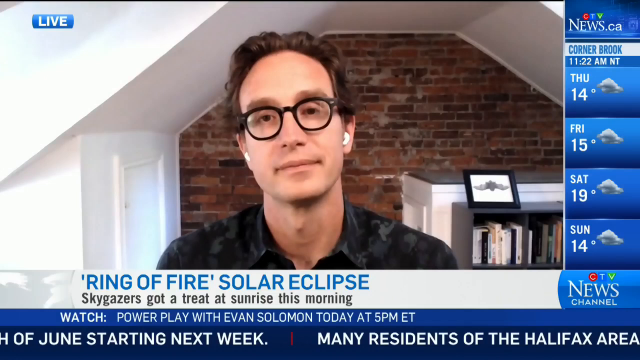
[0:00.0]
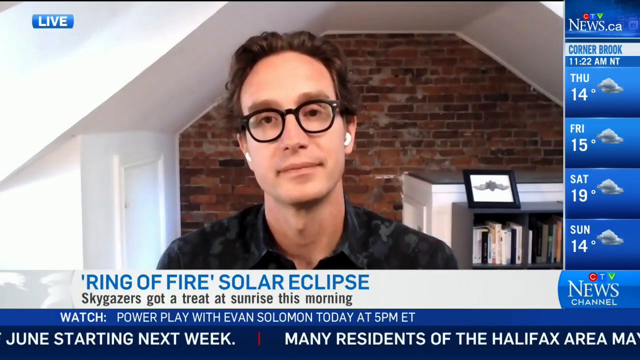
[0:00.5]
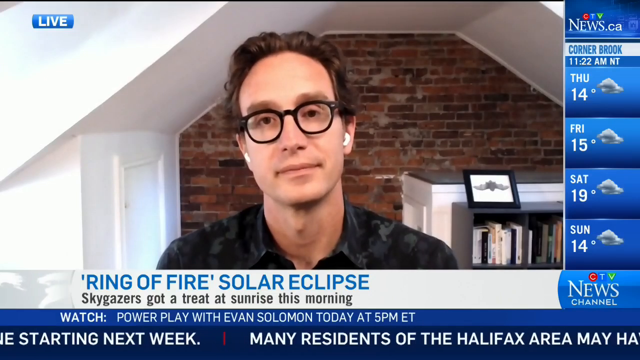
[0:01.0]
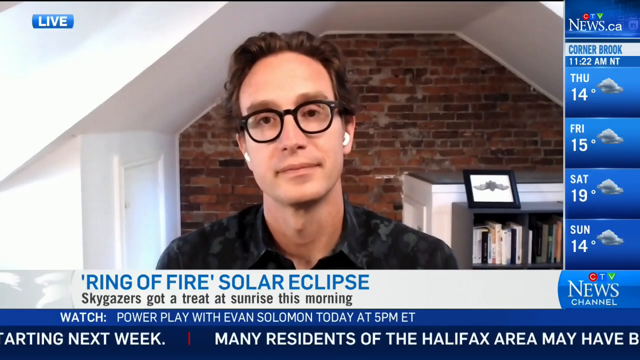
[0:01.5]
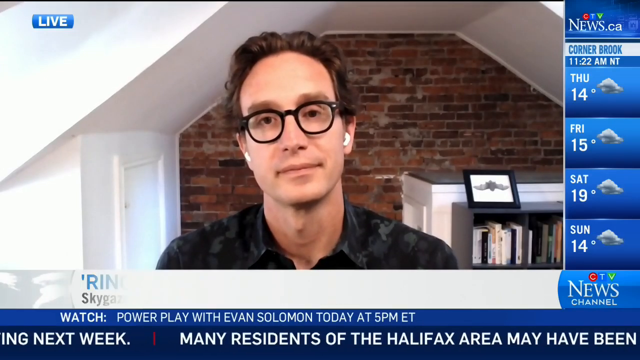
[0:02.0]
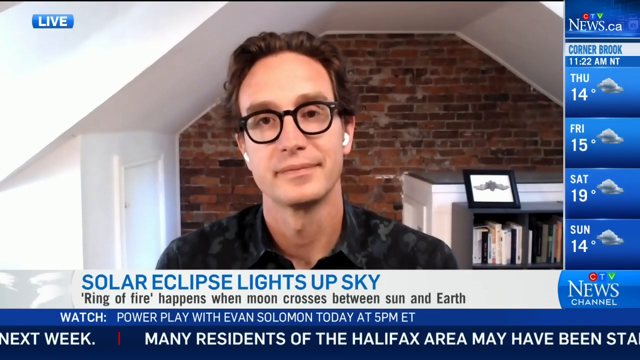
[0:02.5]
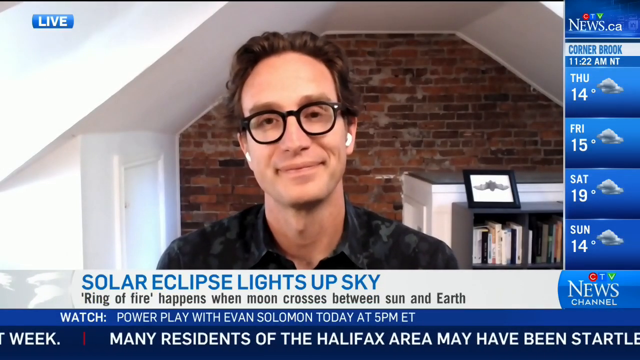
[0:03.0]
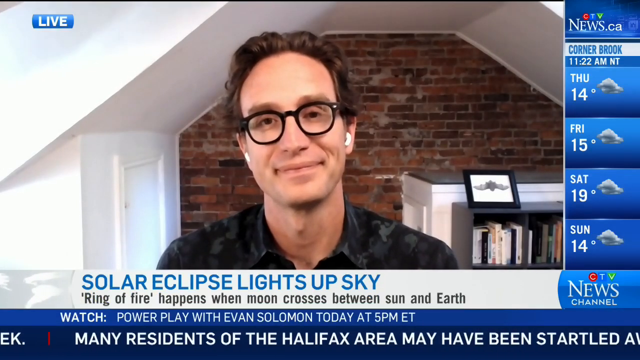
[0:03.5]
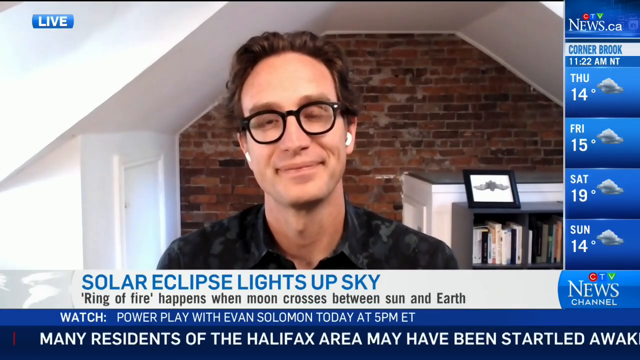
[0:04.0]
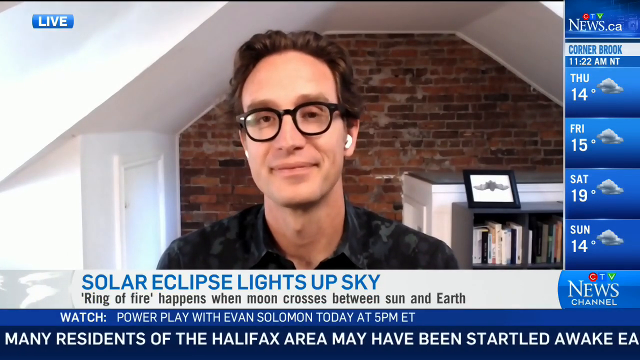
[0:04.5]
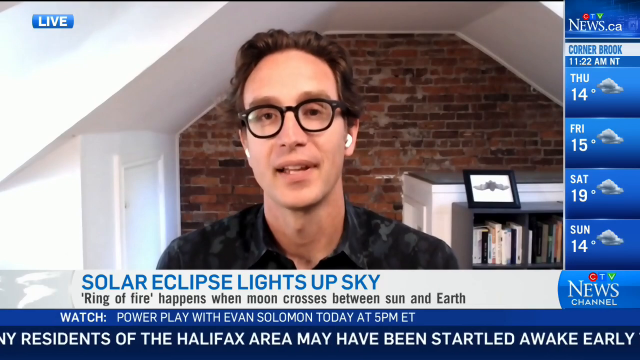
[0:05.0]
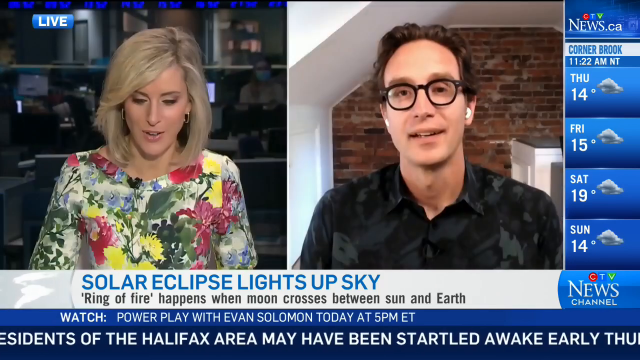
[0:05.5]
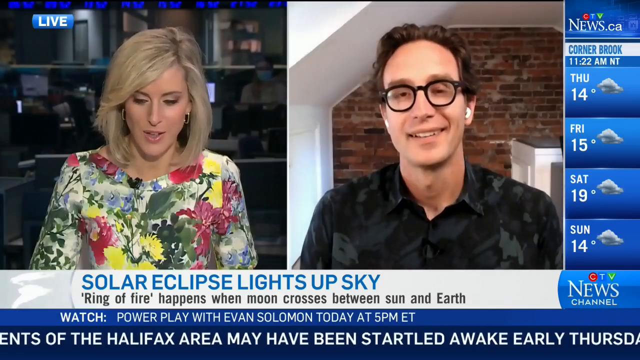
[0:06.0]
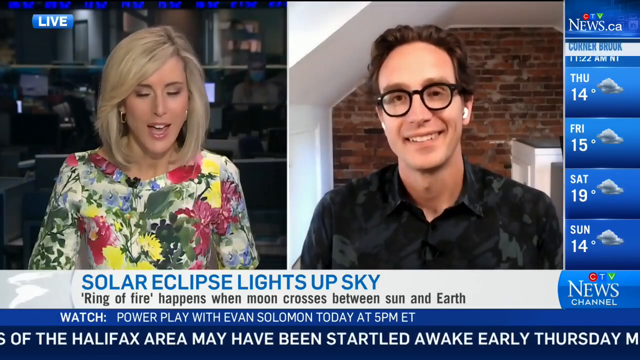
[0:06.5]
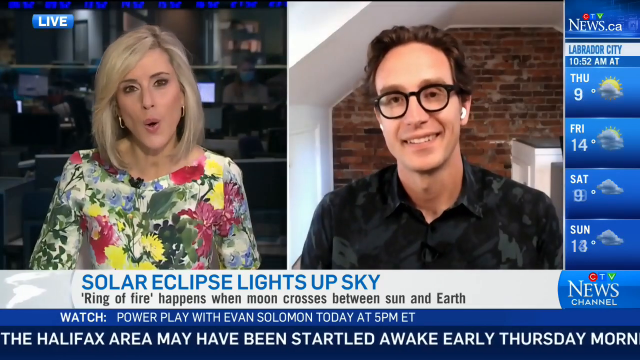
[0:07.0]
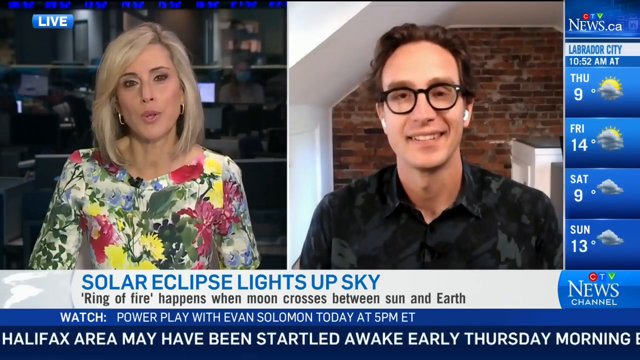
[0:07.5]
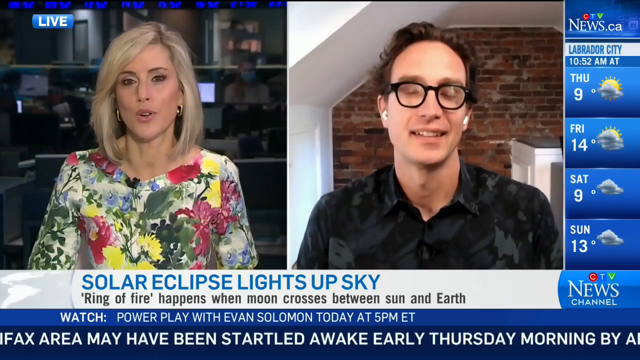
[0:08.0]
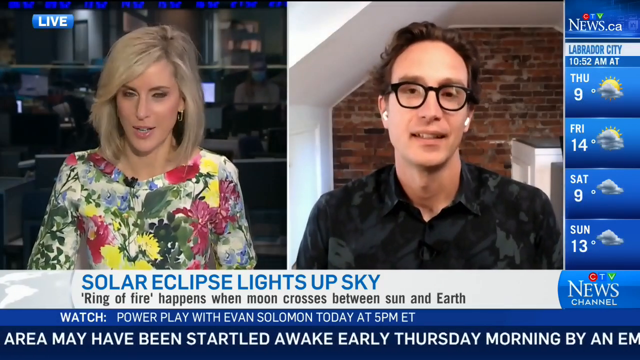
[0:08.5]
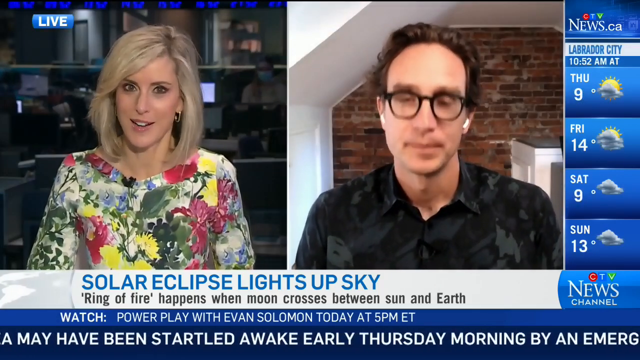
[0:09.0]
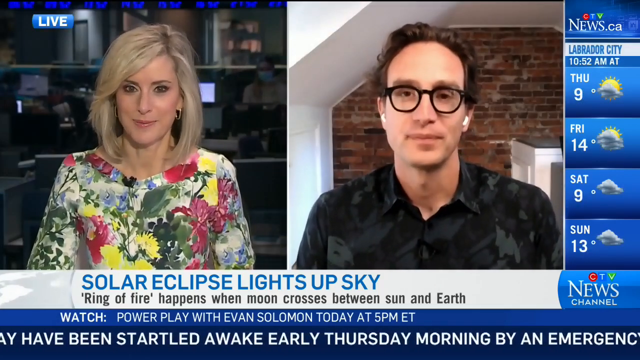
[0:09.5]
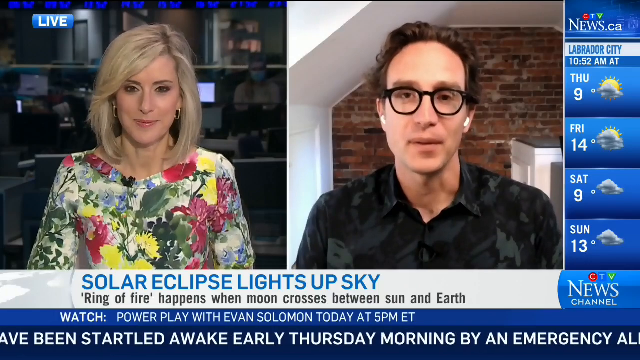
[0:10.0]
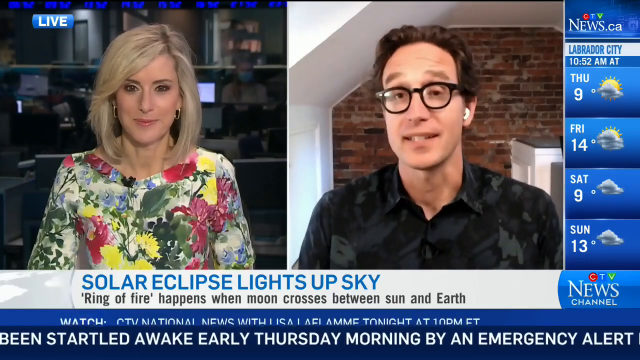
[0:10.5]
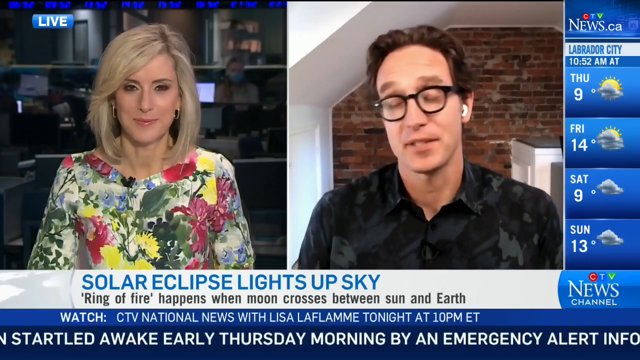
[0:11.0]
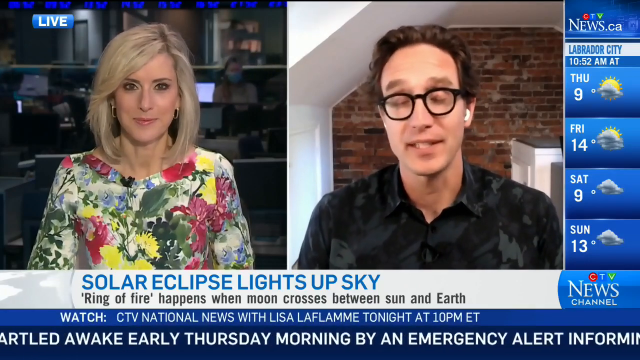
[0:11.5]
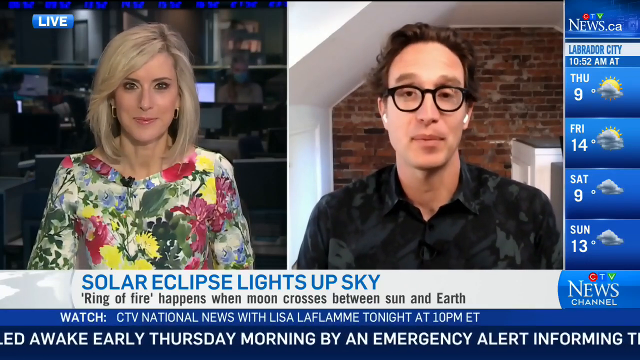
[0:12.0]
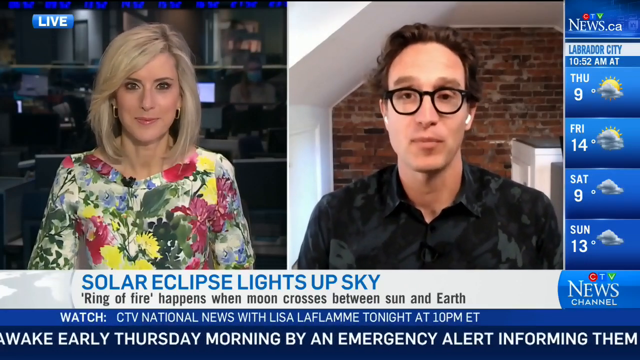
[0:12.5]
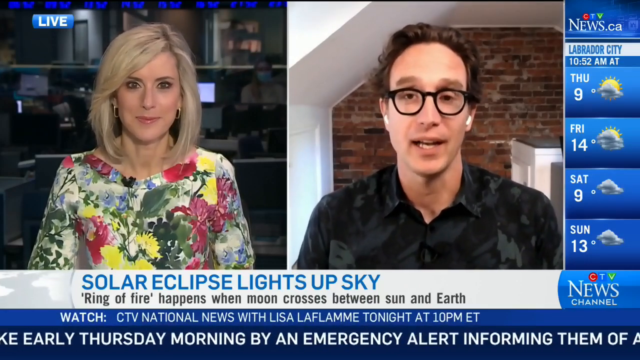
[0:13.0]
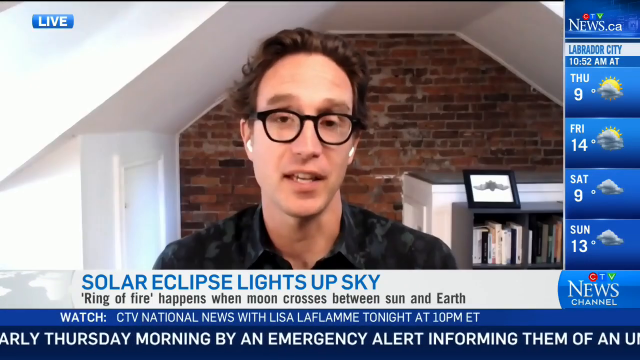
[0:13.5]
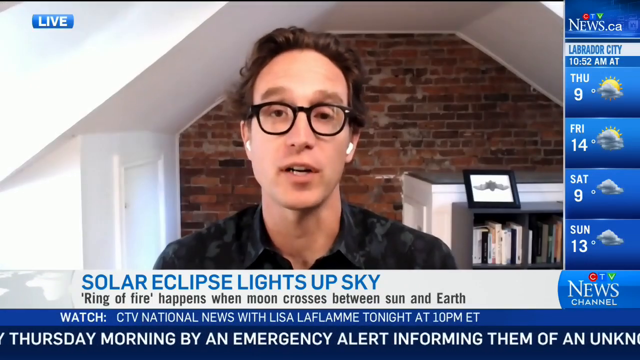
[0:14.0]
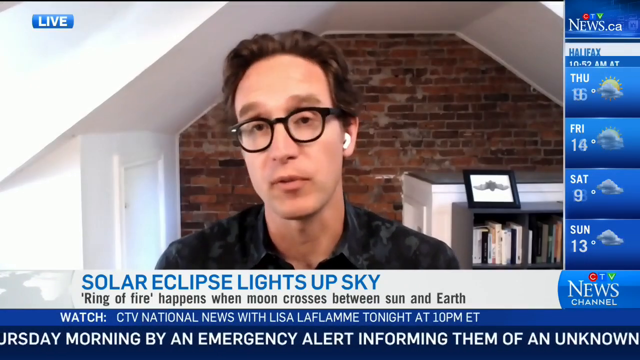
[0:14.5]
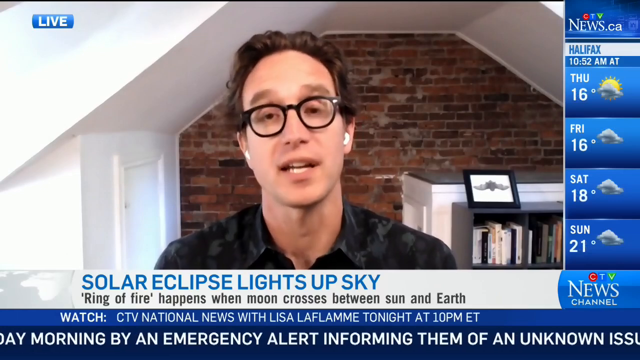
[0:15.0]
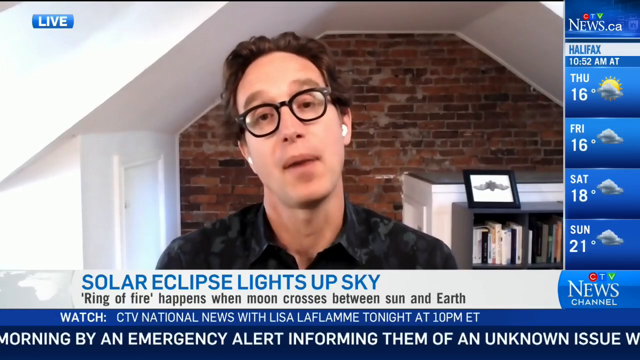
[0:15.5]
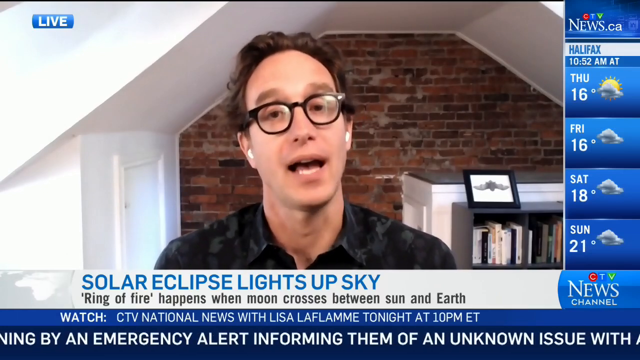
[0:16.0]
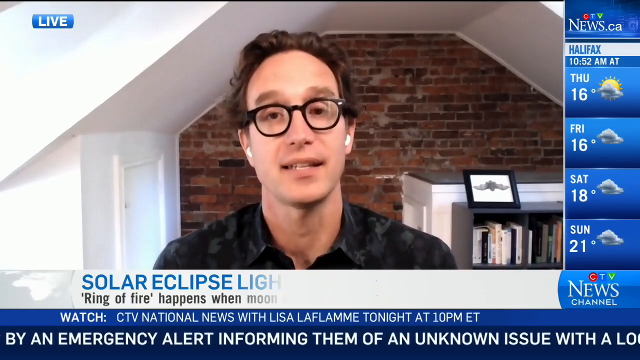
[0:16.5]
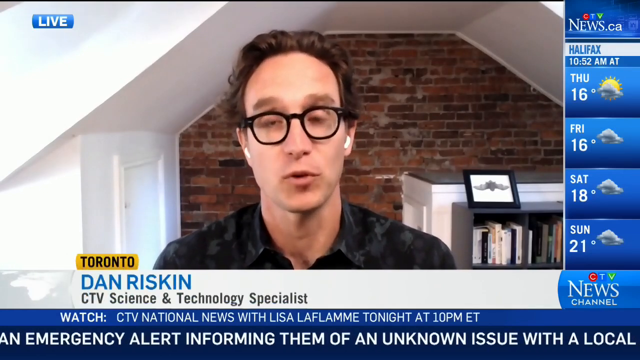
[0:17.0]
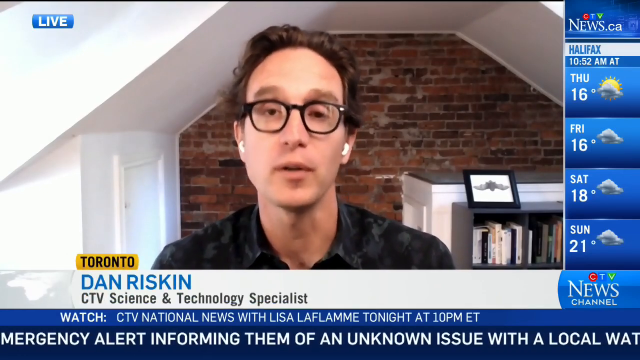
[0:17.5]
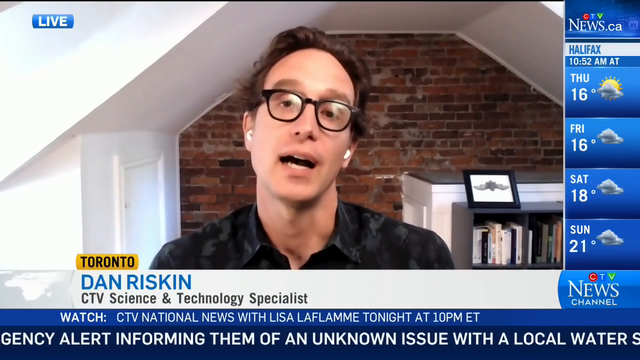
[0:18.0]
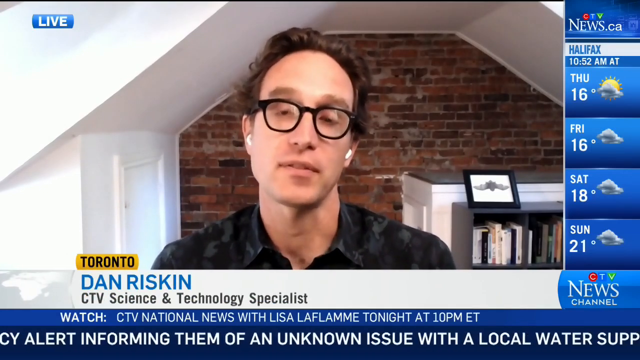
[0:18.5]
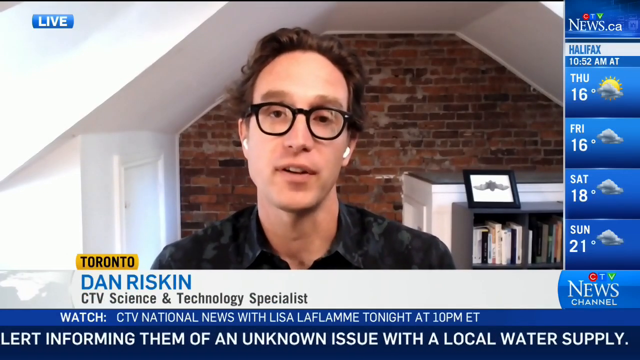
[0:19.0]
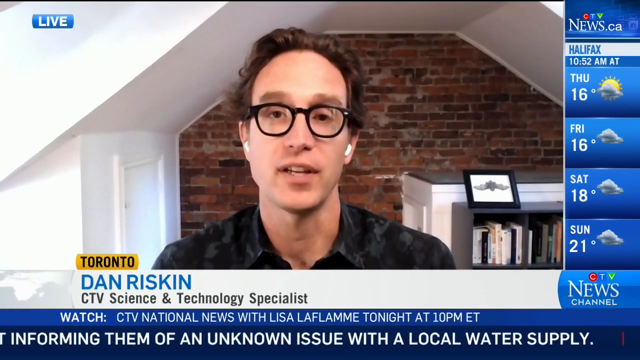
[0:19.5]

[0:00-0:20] A man wears a black t-shirt, black spectacles and a headset on his ears. On the screen is written "solar eclipse lights up sky" along with "ring of the fire happens when moon crosses between sun and earth". The man is white, looks like he is in his 30s, and has short brown hair. He appears on a live broadcast alongside a woman, with both of them shown on screen. She wears a white t-shirt with yellow, pink, green and blue flowers, has long blonde hair and wears earrings. Also on the screen is "ctvnews.ca", a weather listing of Thursday 14 degrees, Friday 15 degrees, Saturday 19 degrees and Sunday 14 degrees, and "CTV News Channel". The two talk and listen to each other, agreeing with each other as they converse.